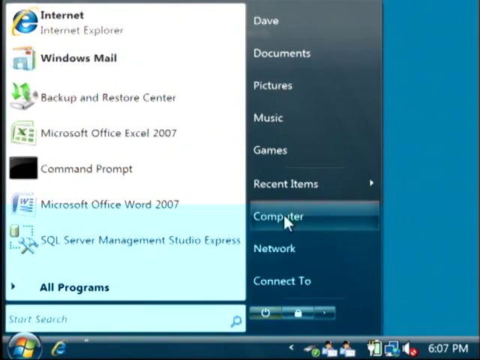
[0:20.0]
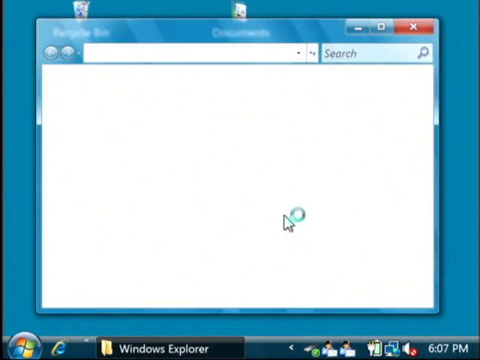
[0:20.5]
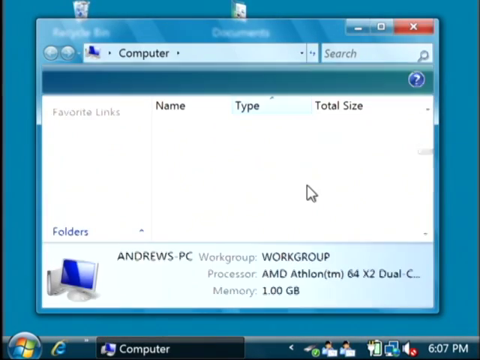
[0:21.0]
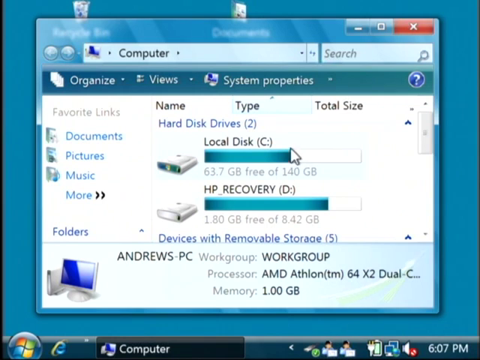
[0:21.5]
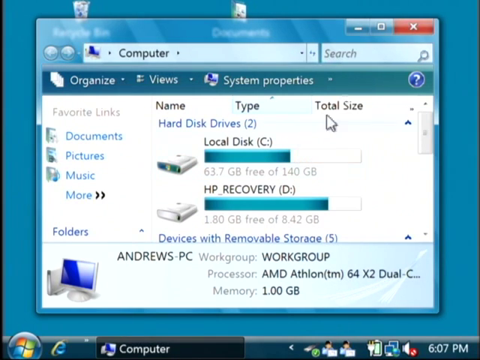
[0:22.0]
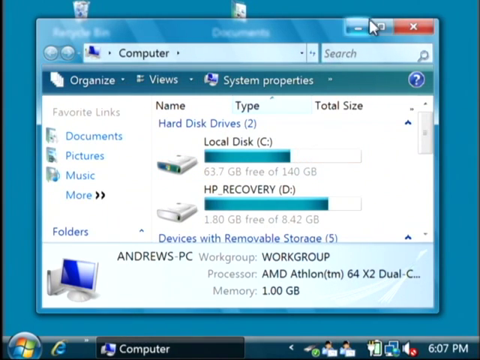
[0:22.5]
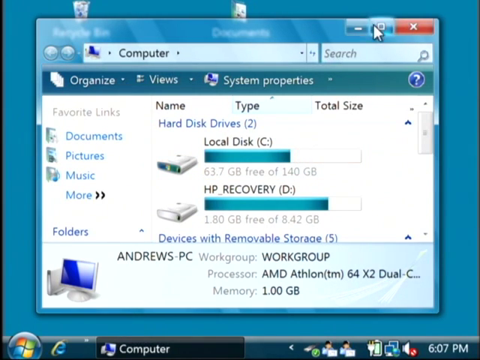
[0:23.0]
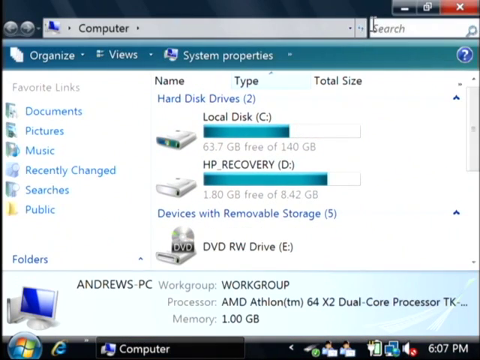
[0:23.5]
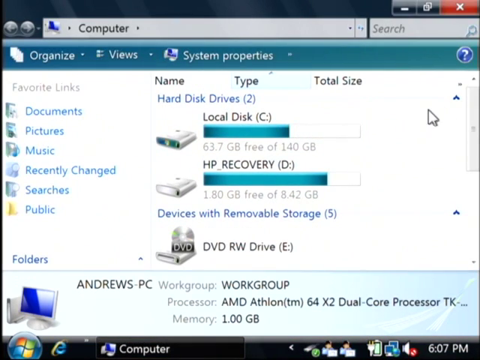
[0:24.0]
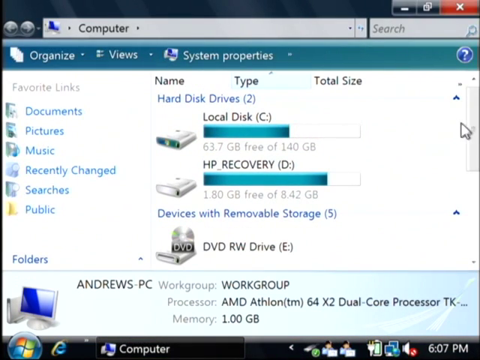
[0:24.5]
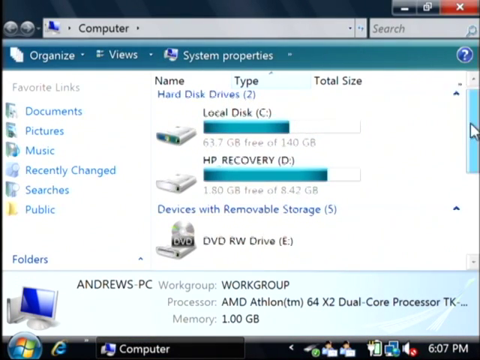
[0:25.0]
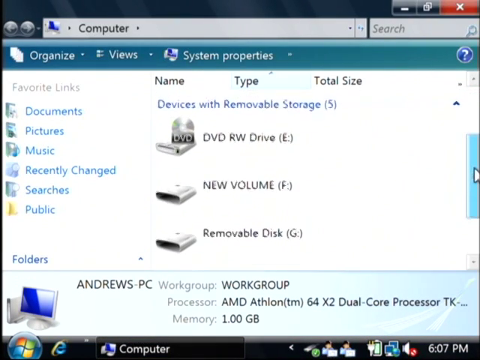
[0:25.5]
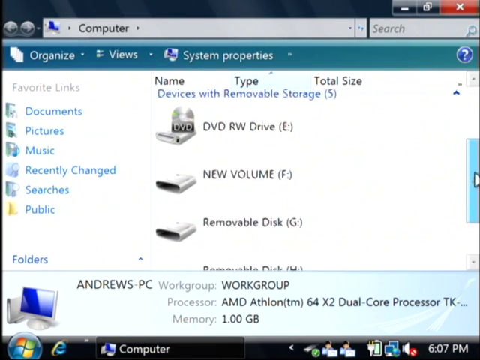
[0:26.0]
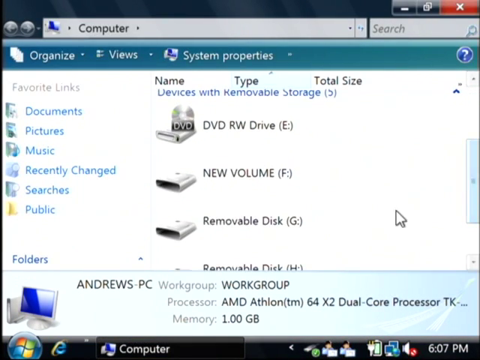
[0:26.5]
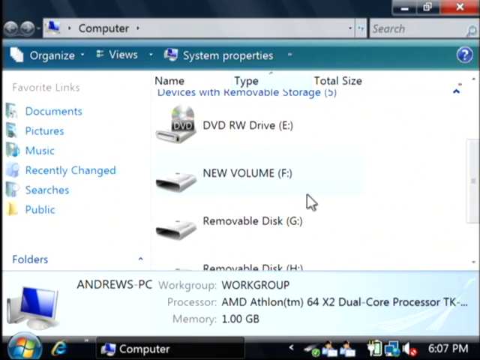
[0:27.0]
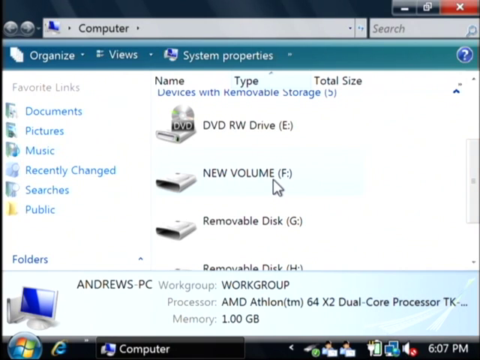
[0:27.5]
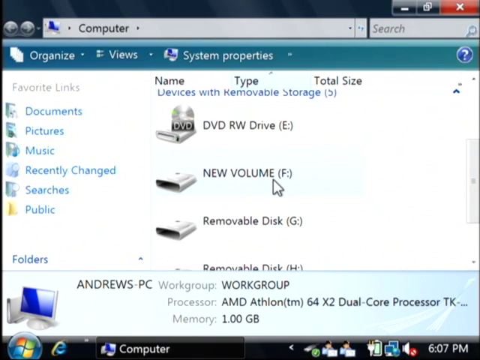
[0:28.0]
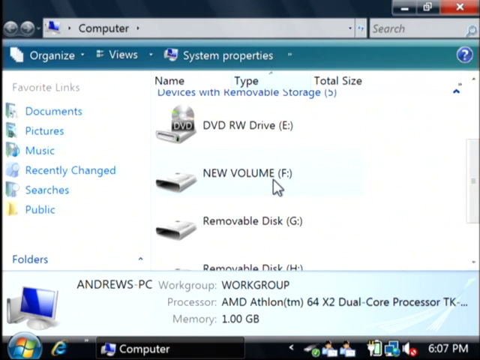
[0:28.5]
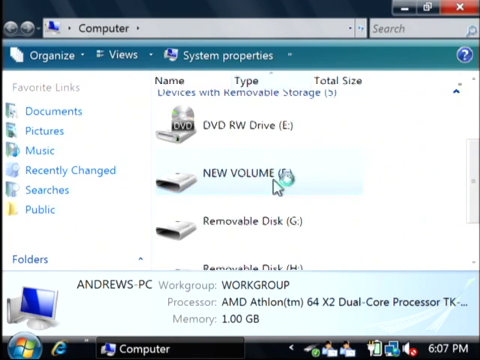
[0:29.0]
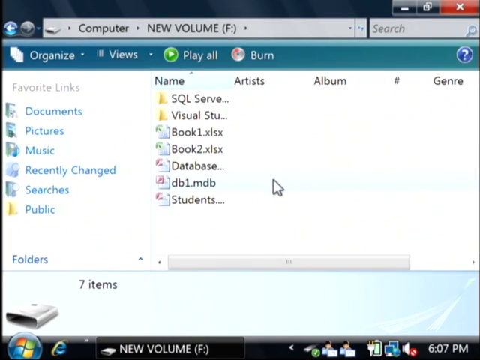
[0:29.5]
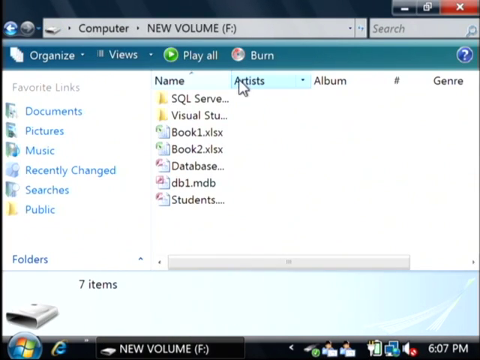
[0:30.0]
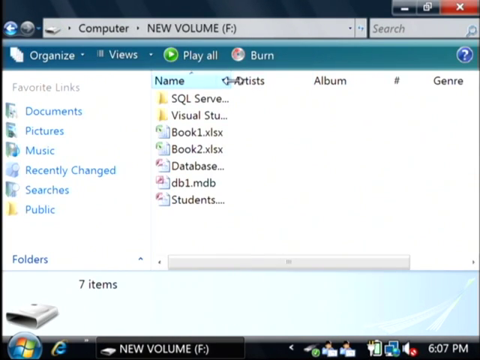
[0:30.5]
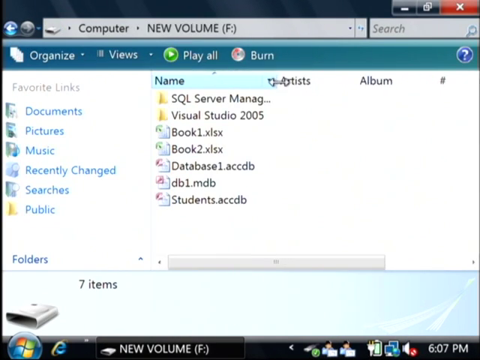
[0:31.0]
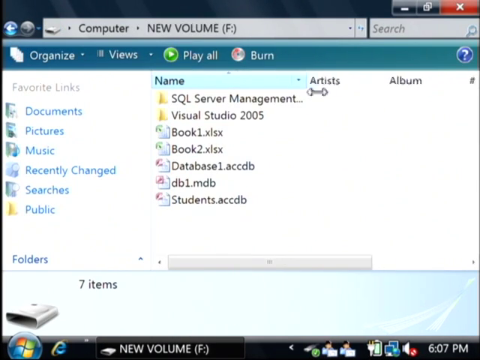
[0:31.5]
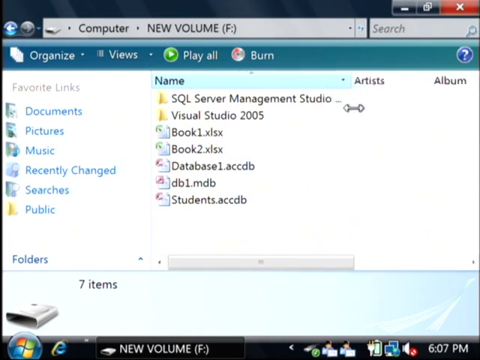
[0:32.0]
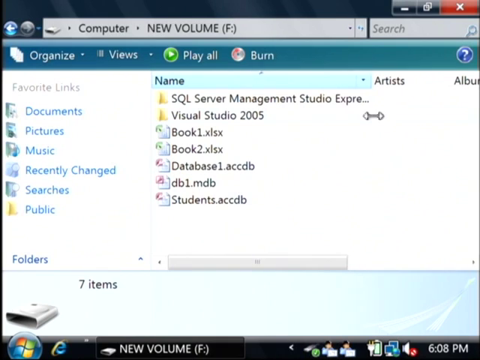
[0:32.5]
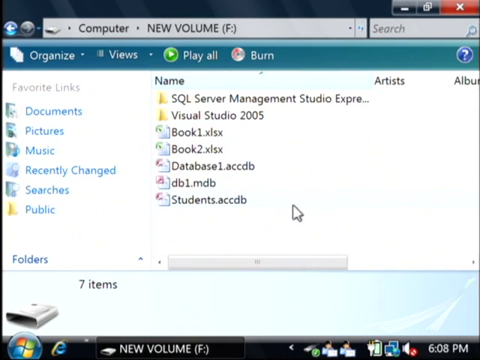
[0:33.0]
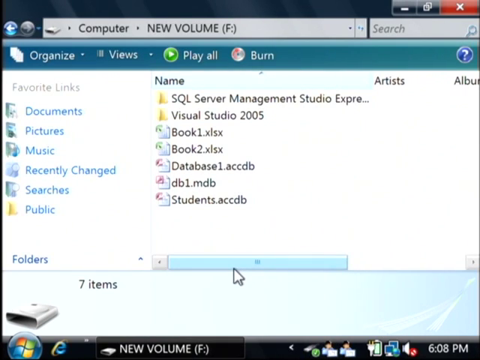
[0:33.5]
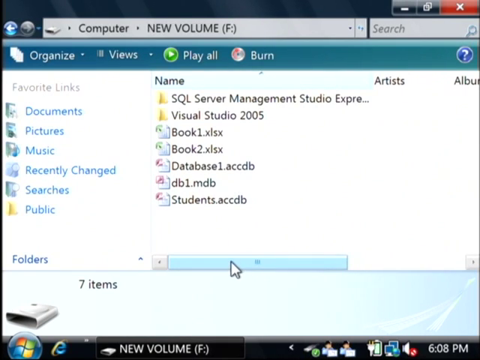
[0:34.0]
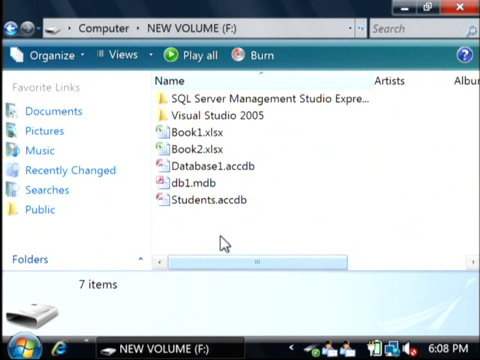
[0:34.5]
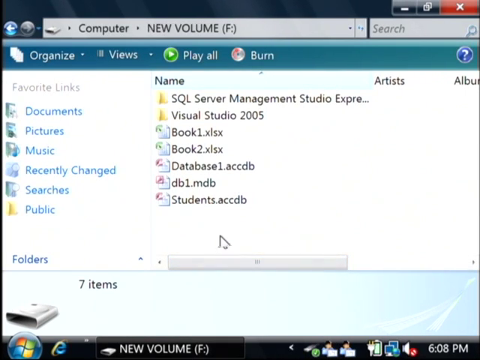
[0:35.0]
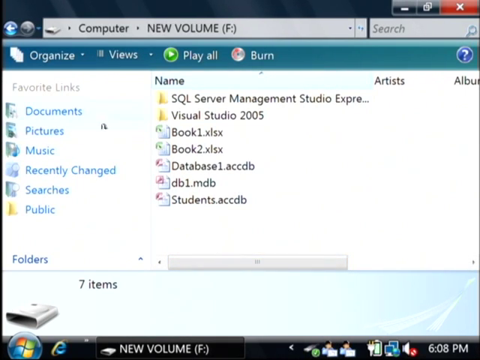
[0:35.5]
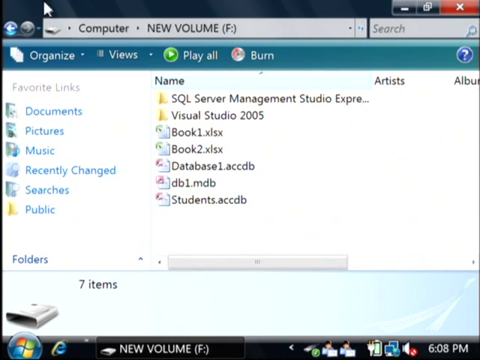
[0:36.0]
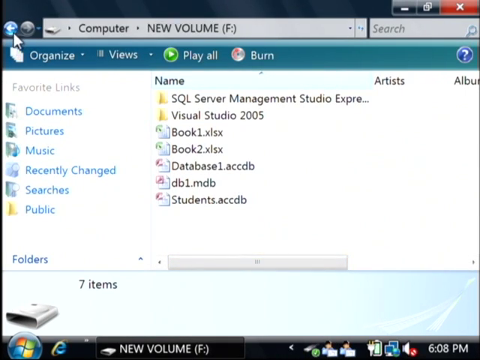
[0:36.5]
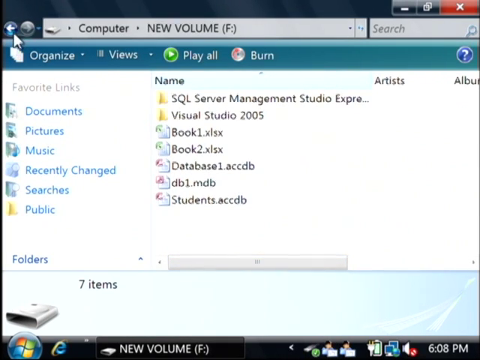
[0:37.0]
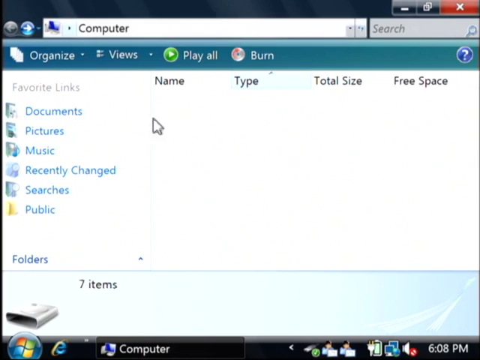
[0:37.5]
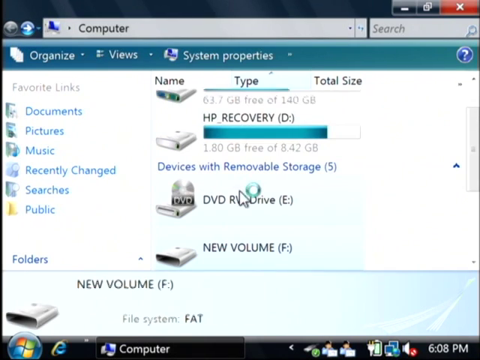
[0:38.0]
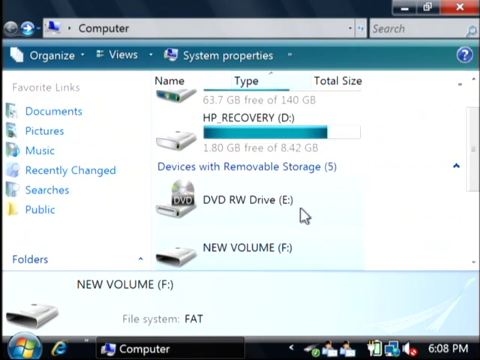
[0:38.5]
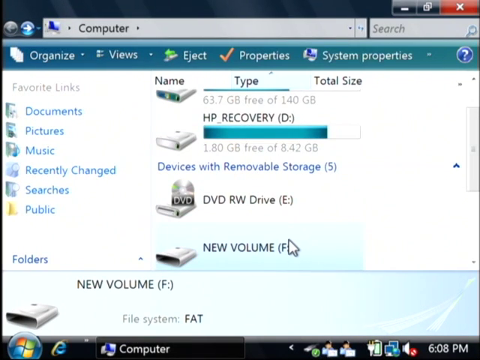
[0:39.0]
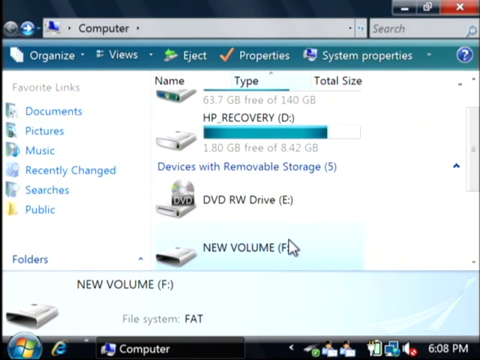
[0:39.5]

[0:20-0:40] With the computer tab open, a list of his hard drives is shown and the mouse hovers over local disk C. He makes the window full screen using the button at the top right and scrolls down to the drives with removable storage, of which there are five. He chooses the one called New Volume, drive F. Opening drive F brings up another window, and he pauses over a tab along the top of the window that says "Artists". He extends the Name tab by dragging it to the right, and the mouse moves across the screen as he looks through the folders. He then uses the back button at the top right to return to the original computer window and clicks once more on the folder named New Volume F.